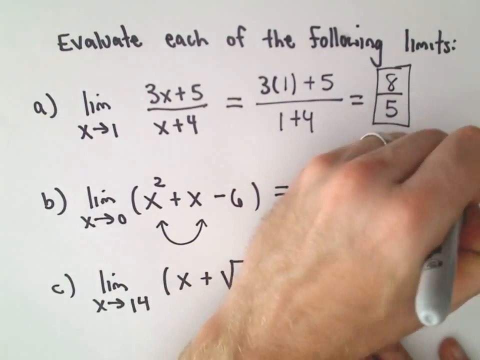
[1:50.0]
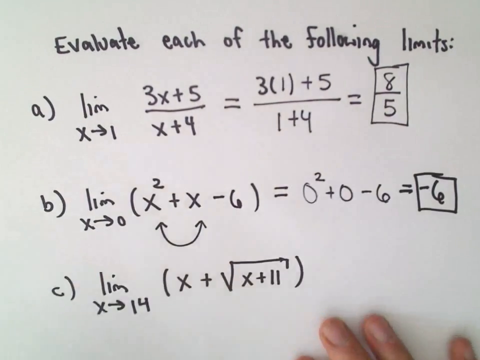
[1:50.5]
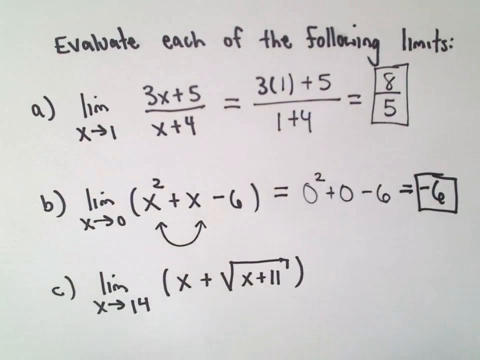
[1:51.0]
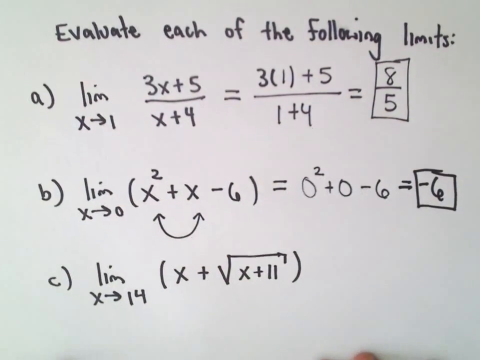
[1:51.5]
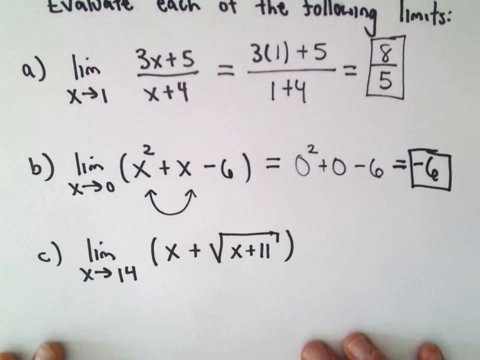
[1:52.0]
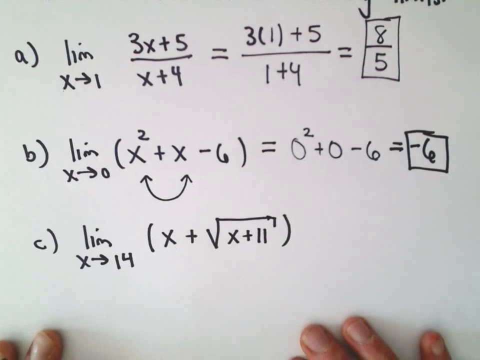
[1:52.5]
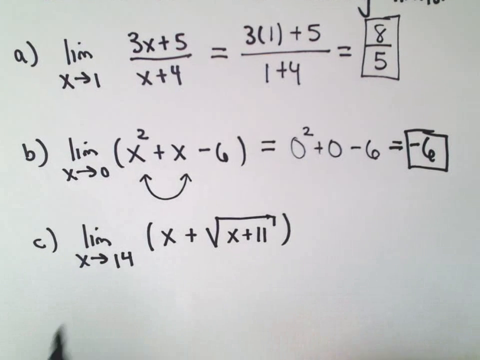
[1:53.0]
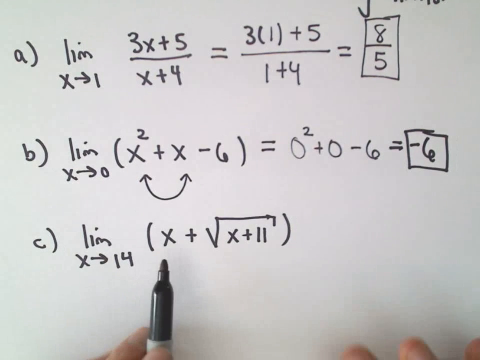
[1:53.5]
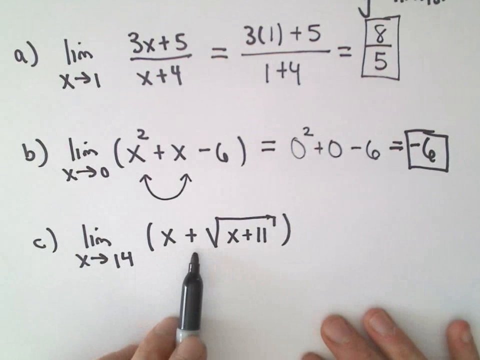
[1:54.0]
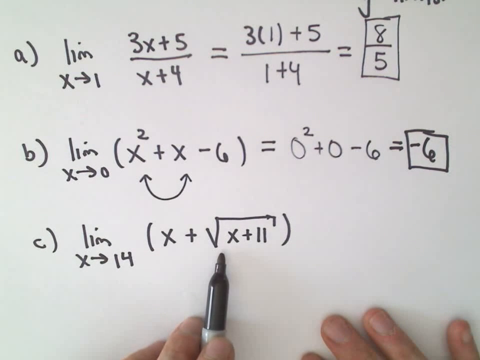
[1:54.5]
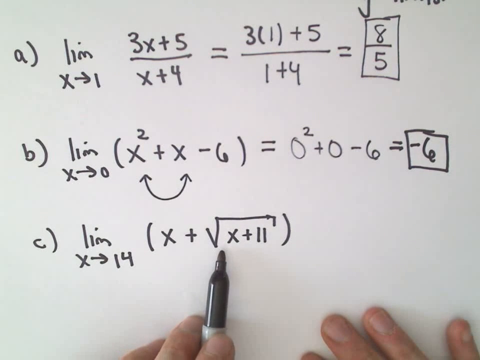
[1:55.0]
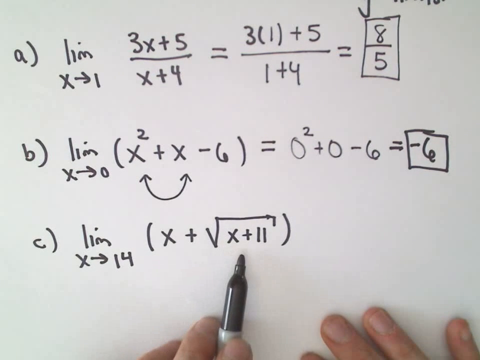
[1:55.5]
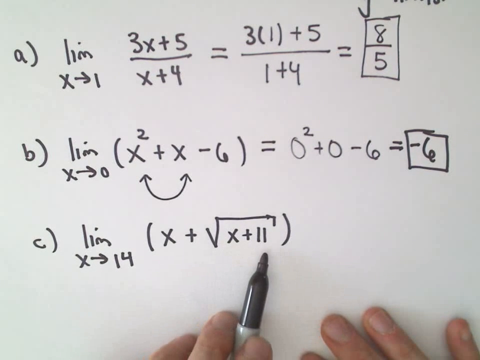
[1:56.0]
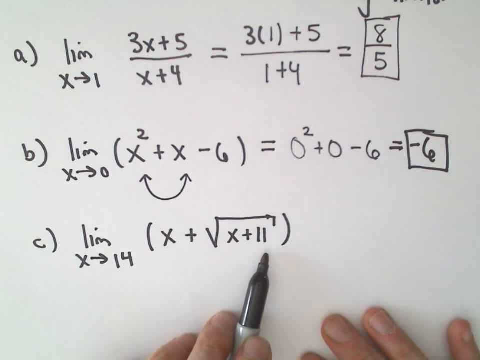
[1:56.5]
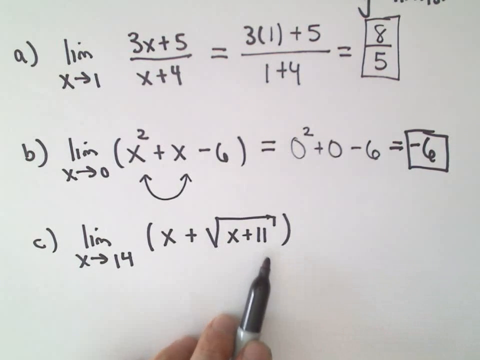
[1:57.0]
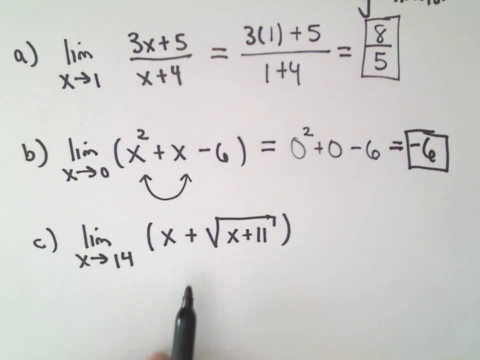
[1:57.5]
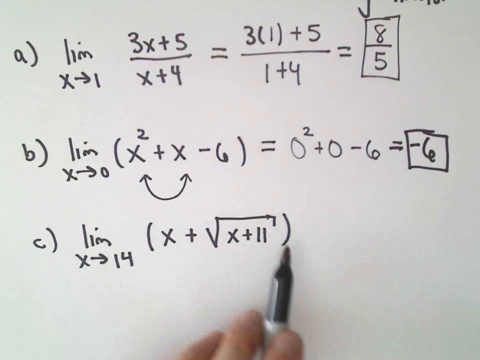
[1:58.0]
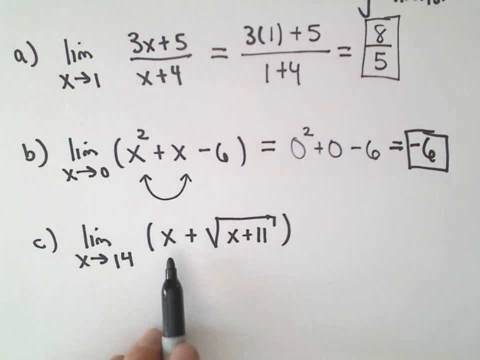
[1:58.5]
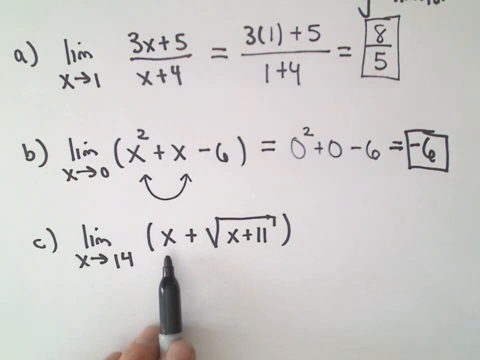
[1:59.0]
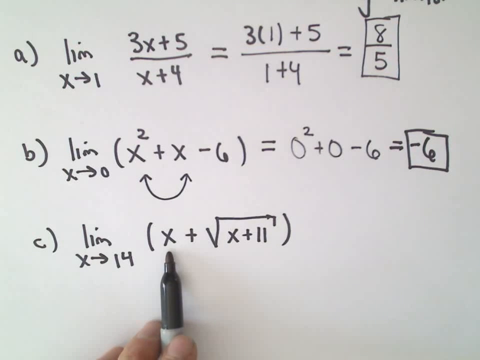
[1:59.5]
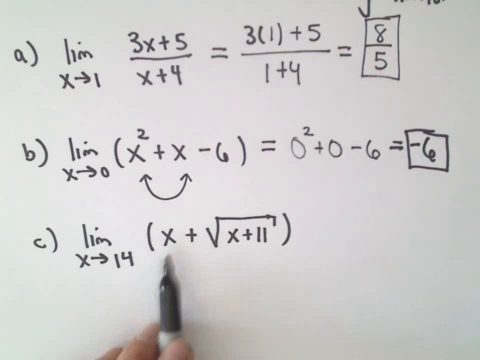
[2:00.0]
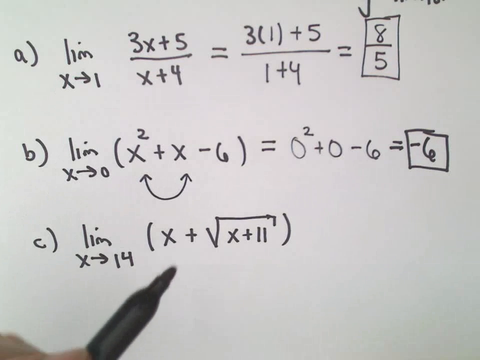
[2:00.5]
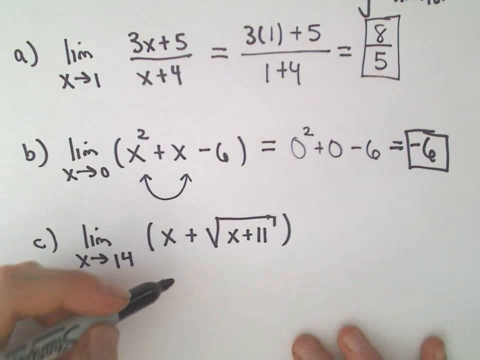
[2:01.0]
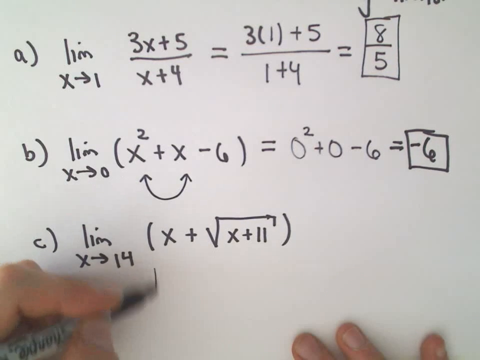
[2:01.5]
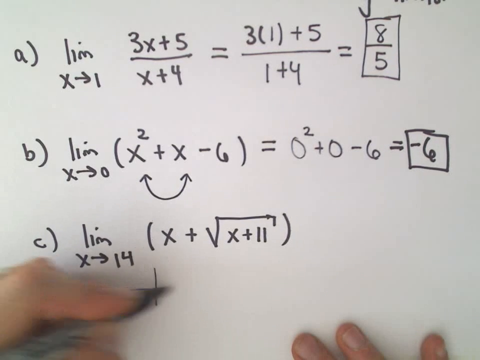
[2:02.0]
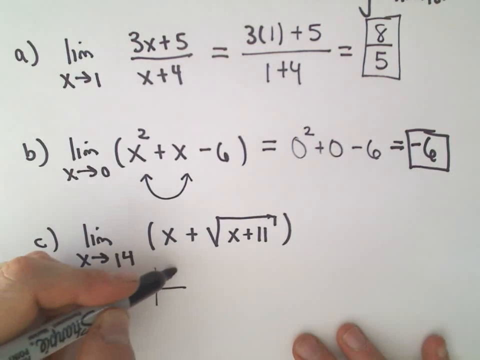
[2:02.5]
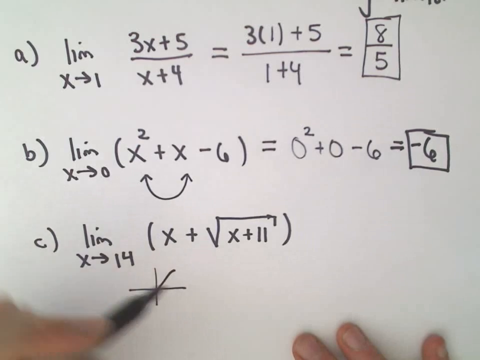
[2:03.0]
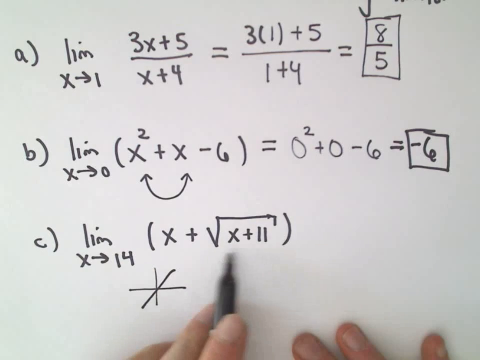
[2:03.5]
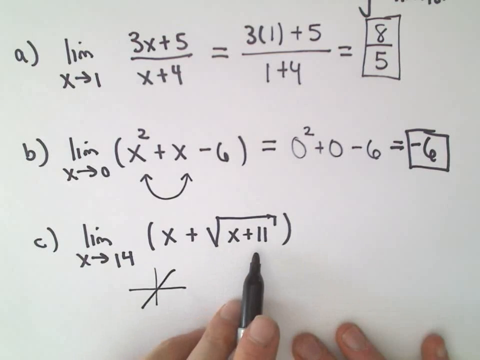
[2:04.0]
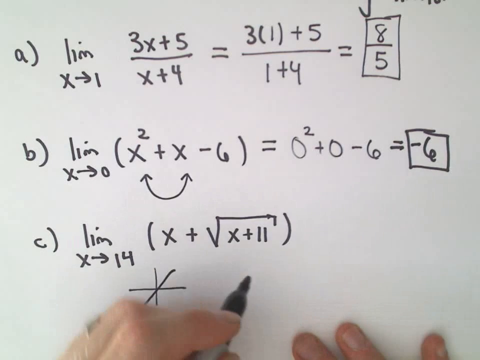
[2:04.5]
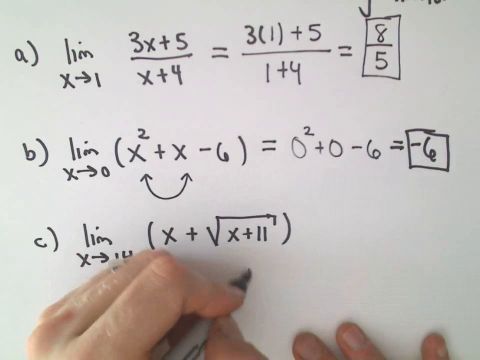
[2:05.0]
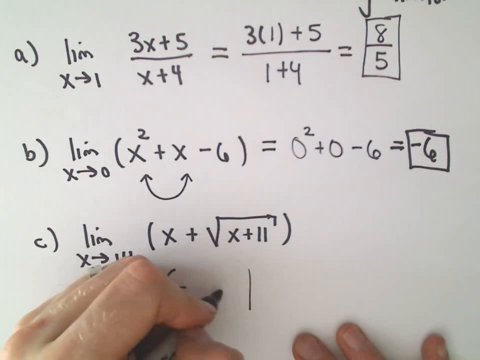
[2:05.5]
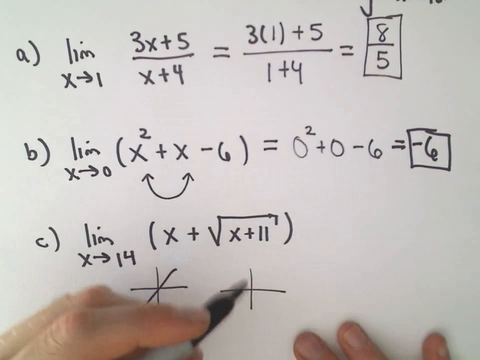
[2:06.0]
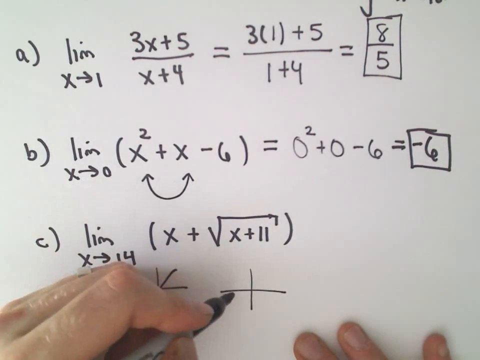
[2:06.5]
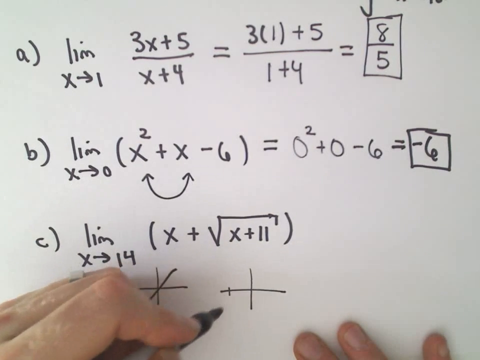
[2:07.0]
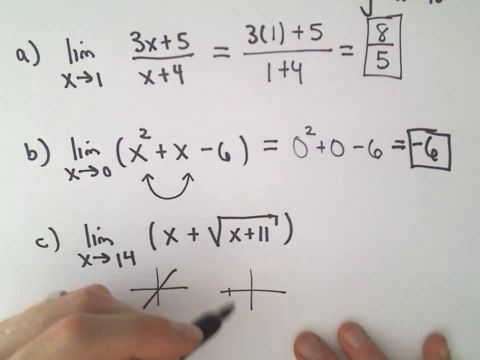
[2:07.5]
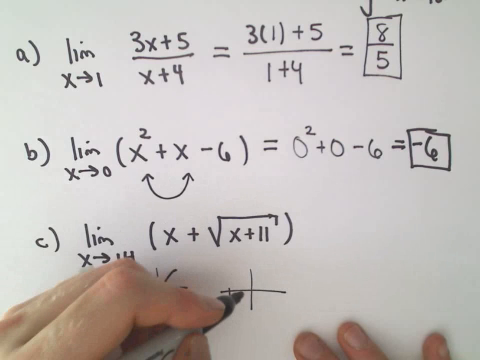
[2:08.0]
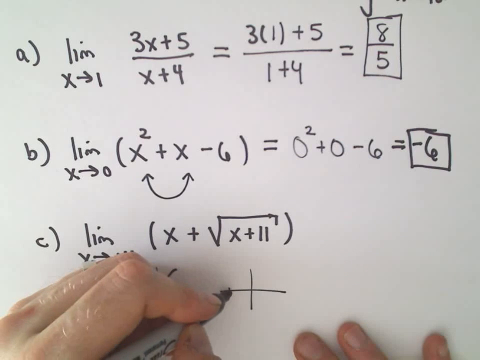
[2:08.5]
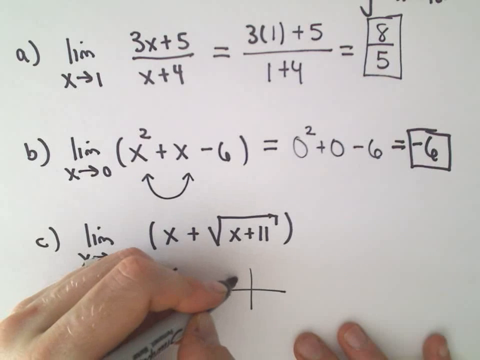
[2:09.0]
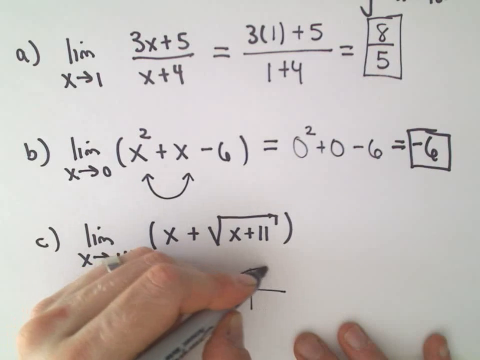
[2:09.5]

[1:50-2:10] He has written negative six next to an equation and drawn a square around it. His hand then shifts down to equation B or problem C, where he begins drawing lines with the sharpie. He draws what appears to be a plus sign with a line running through it. Beside it he draws another plus sign with what appears to be an arrow or line graph going upward toward the top half of the plus sign, and he draws a little arrow at its end to indicate that it continues into a curved line graph. He then shifts the paper slightly.